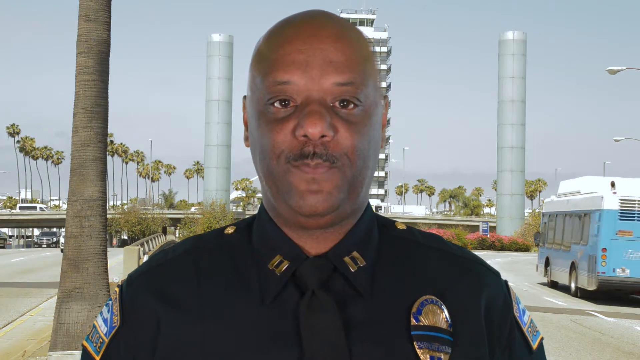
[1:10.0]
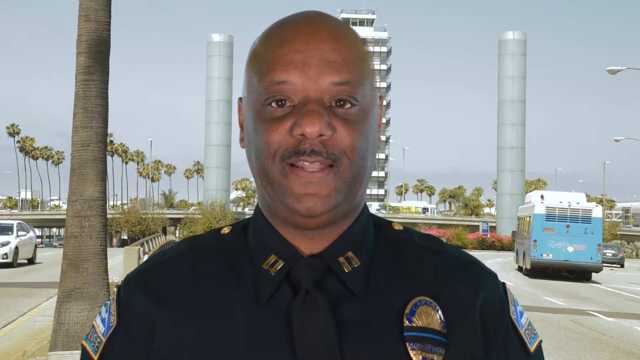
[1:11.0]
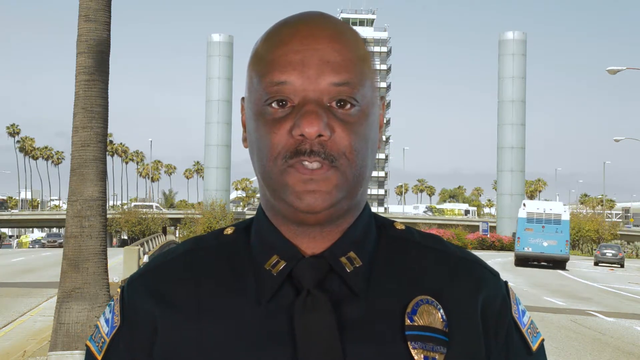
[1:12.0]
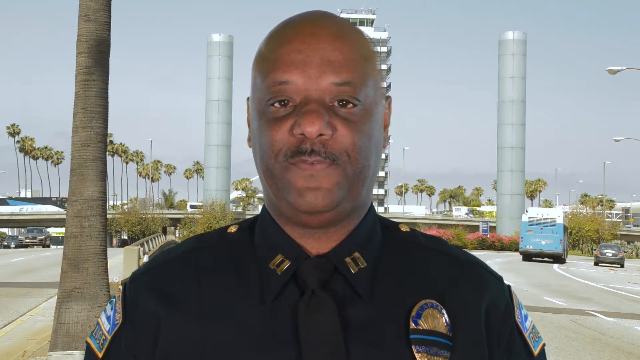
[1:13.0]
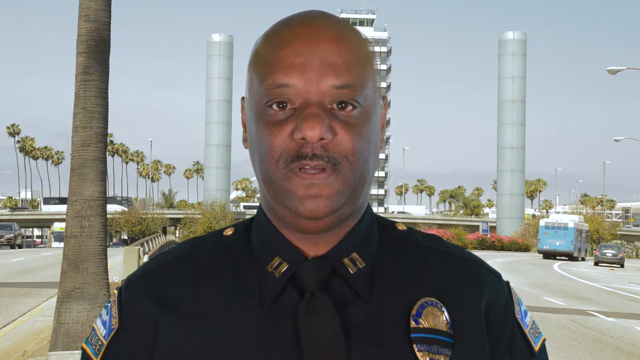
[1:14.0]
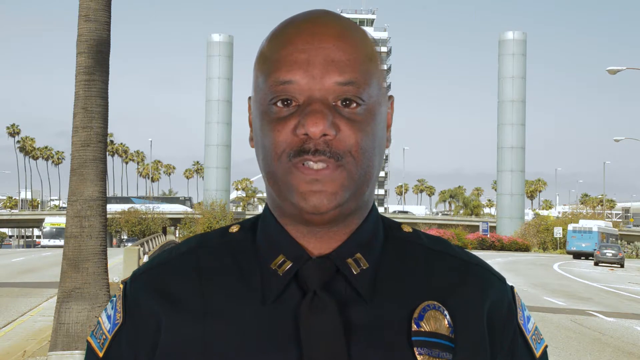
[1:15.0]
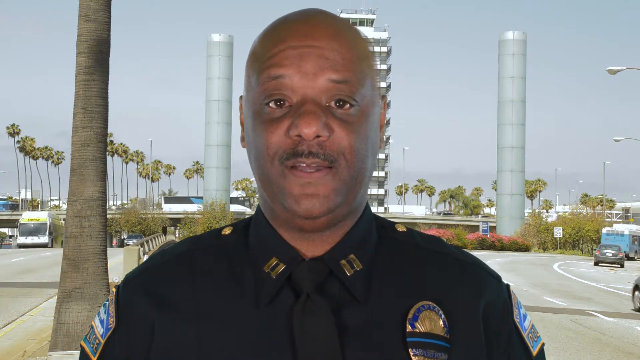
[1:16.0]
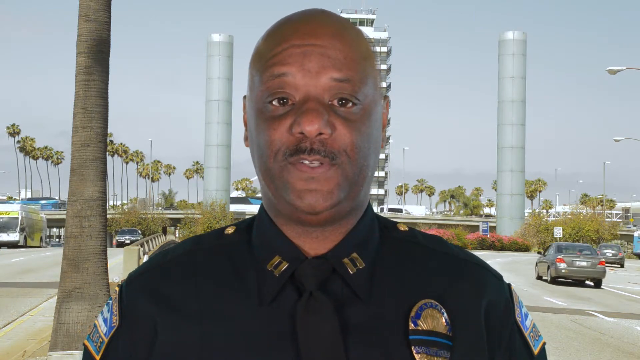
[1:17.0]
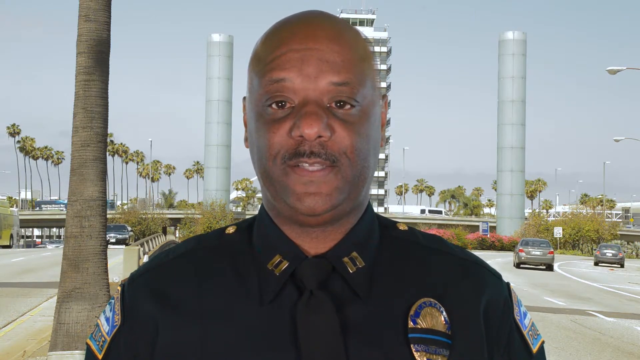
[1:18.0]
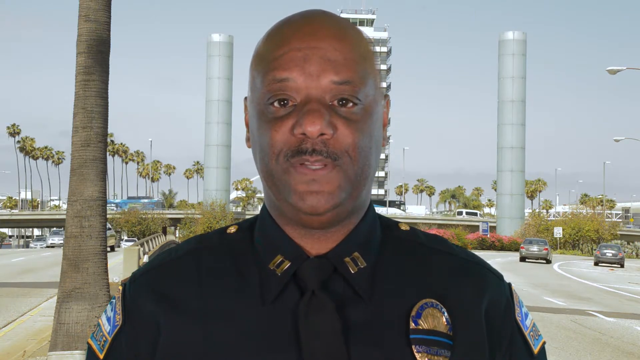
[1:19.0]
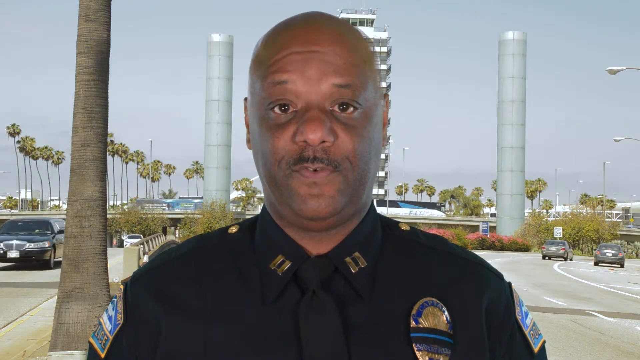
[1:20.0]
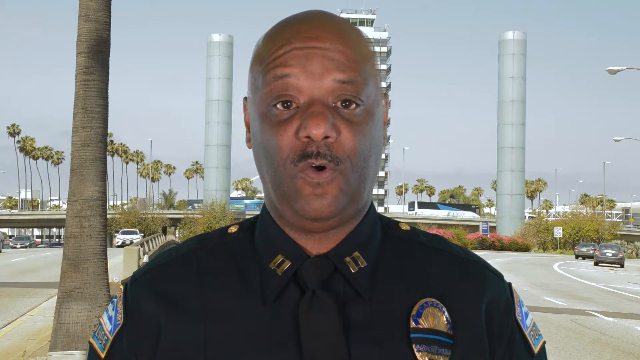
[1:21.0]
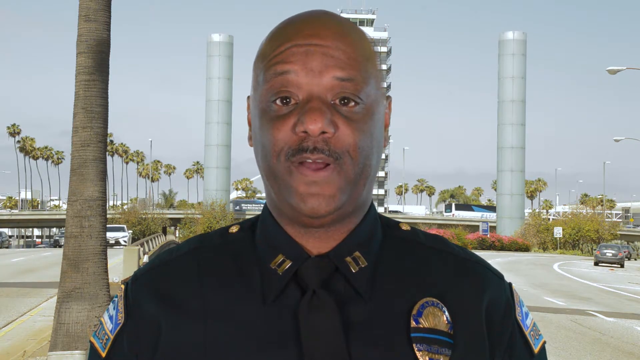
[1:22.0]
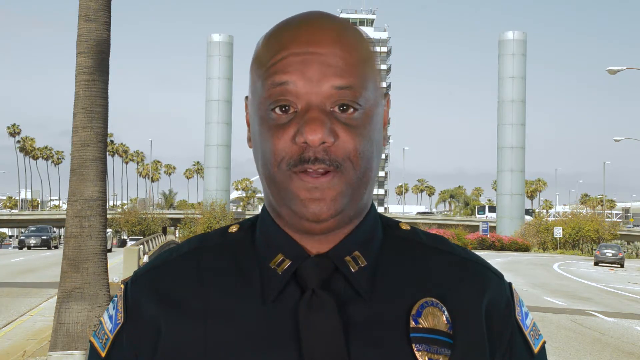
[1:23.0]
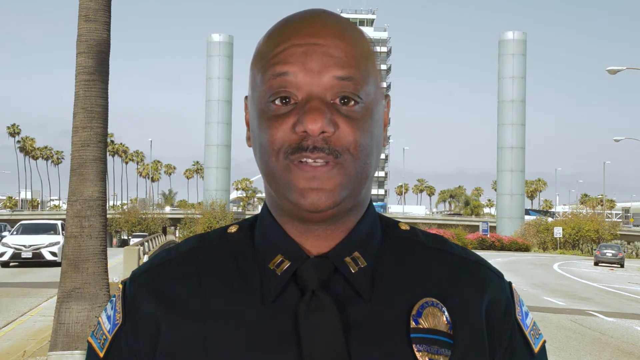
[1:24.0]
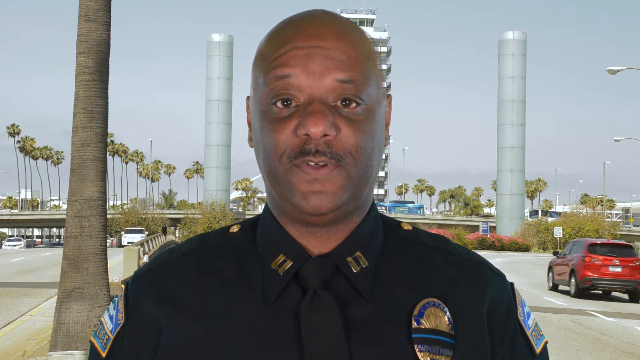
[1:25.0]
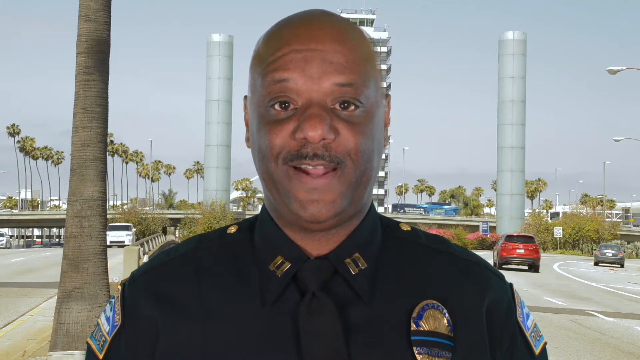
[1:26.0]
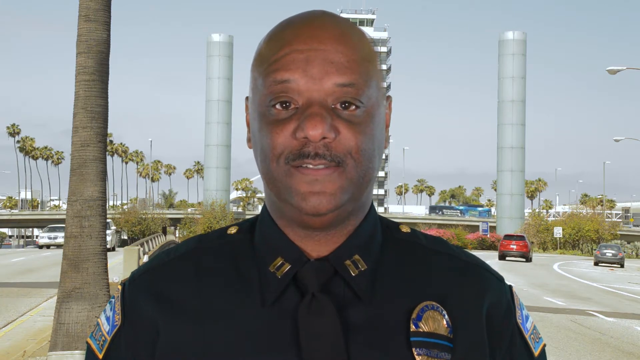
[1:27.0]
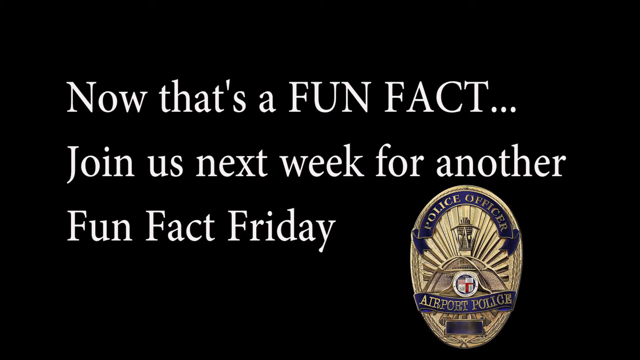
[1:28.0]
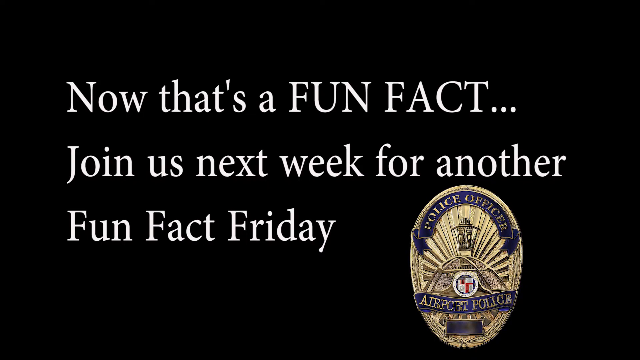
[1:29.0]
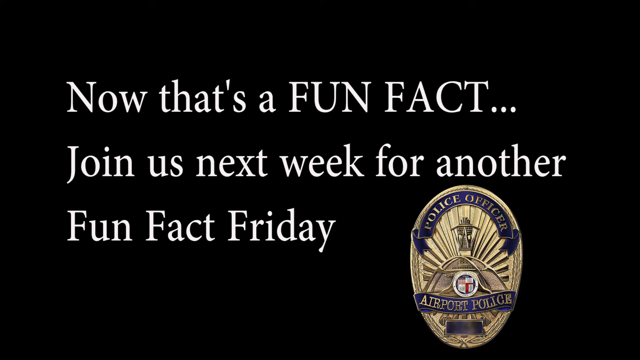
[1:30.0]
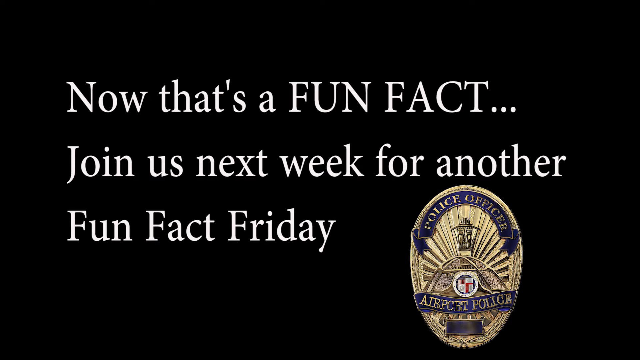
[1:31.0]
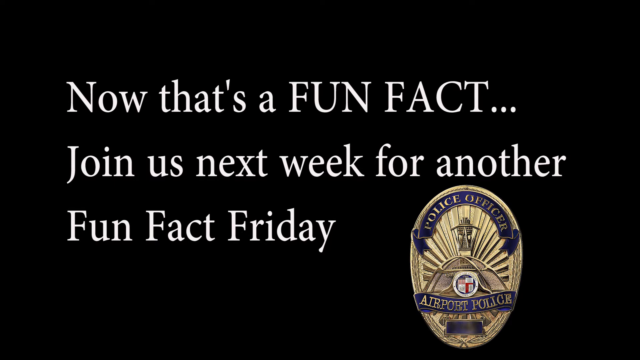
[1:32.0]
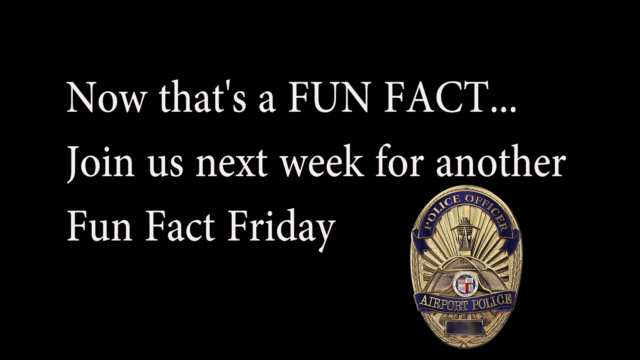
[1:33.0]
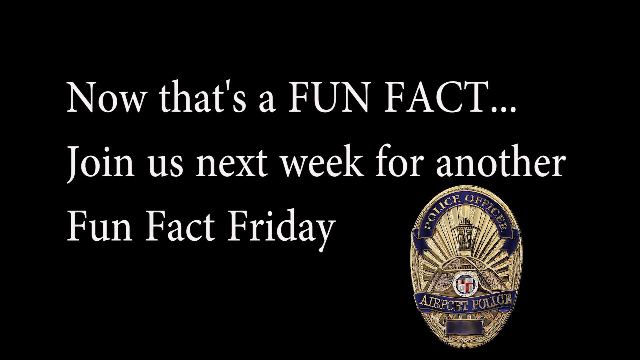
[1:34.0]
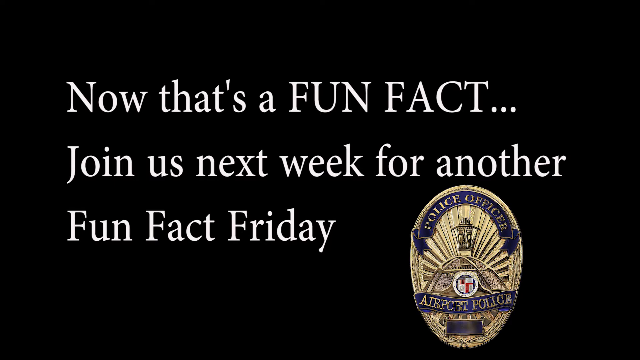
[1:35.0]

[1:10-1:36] Captain Tyrone Storwells is on screen, his lips and eyes moving and slightly blinking as he talks. Vehicles move past on the highway in the background, including a black limousine and a Toyota. Tall palm fronds sway and two long white poles are also in the background. The video then cuts to white text reading "now that's a fun fact...", followed by "join us next week for another fun fact Friday" in white on a black background. At the bottom right of the screen is a gold and blue badge with the text "police officer" and "airport police" in gold. The view zooms out and fades to black.